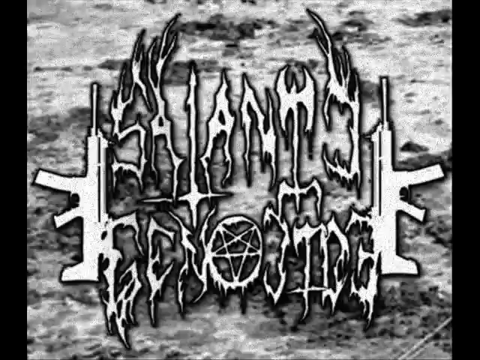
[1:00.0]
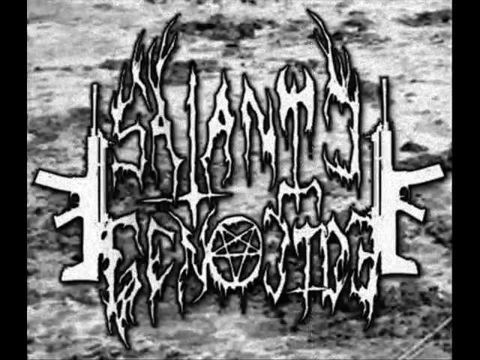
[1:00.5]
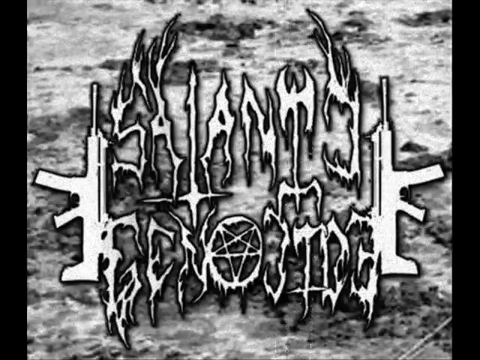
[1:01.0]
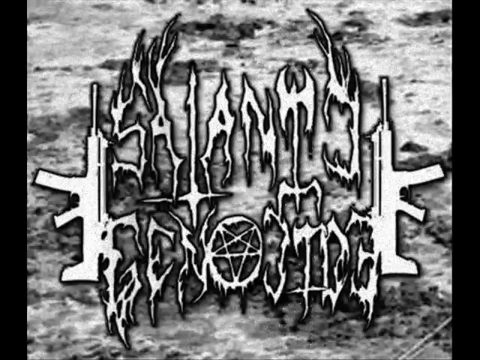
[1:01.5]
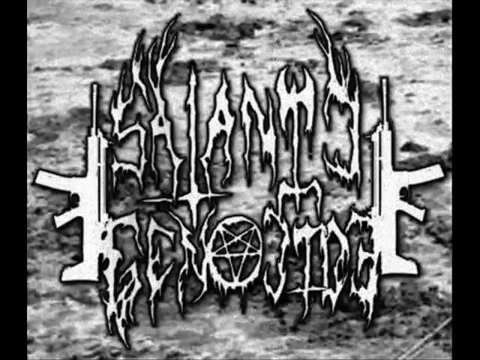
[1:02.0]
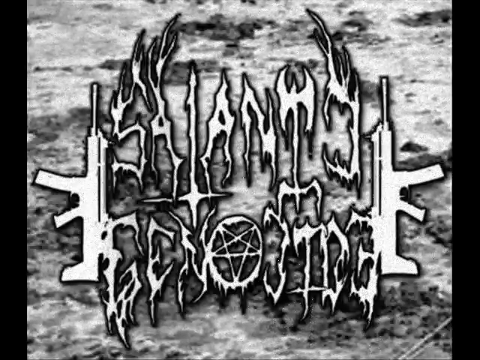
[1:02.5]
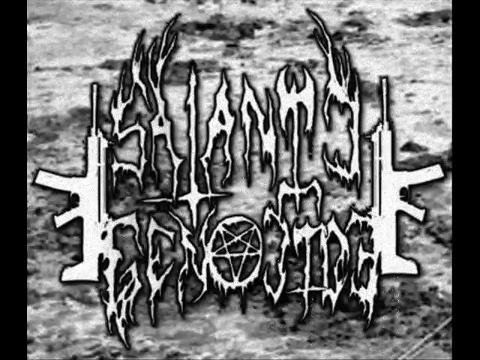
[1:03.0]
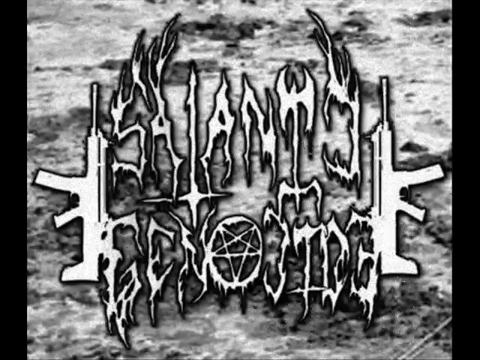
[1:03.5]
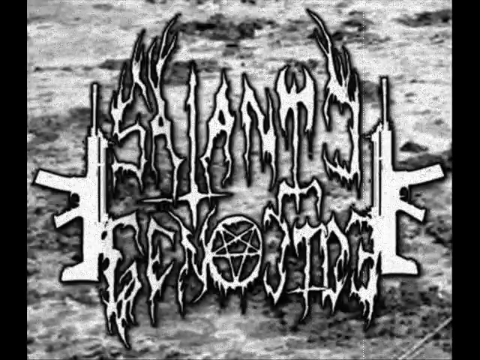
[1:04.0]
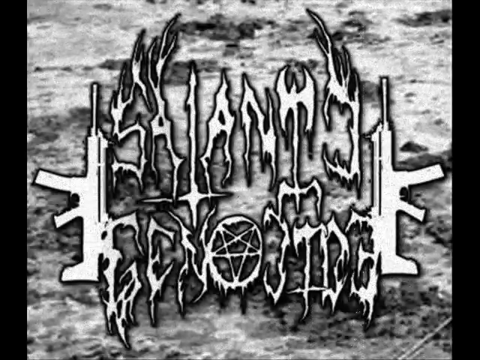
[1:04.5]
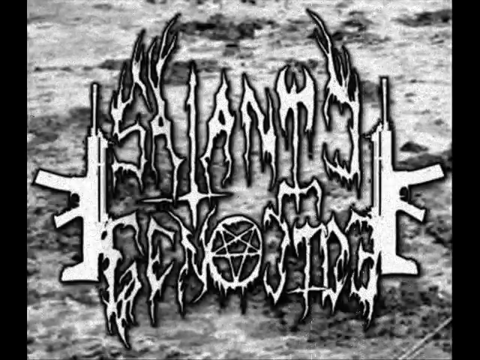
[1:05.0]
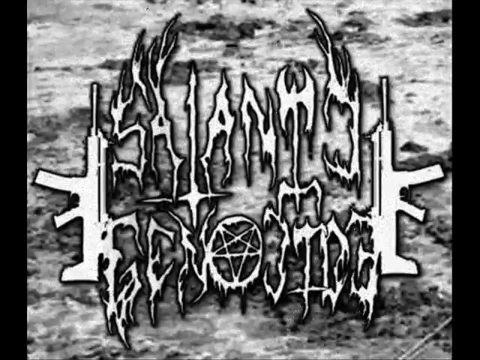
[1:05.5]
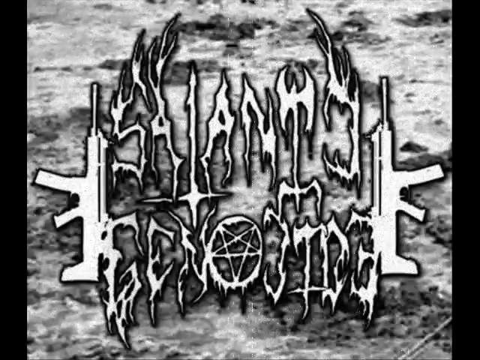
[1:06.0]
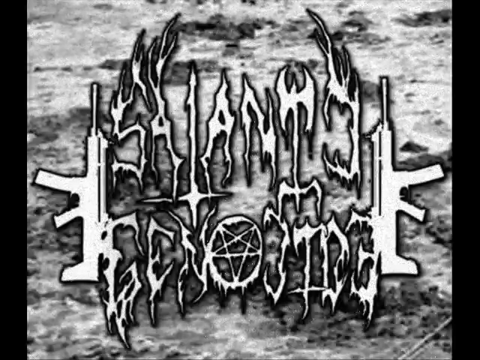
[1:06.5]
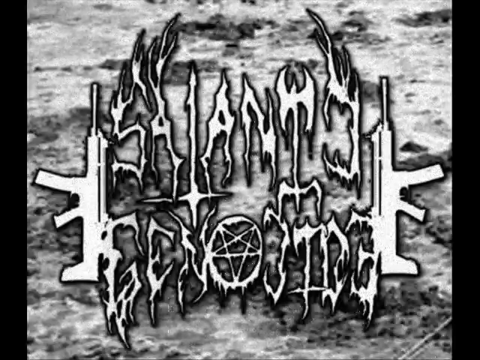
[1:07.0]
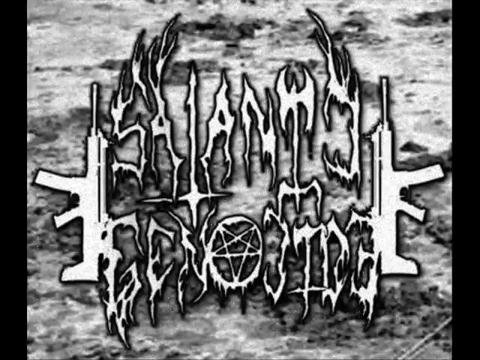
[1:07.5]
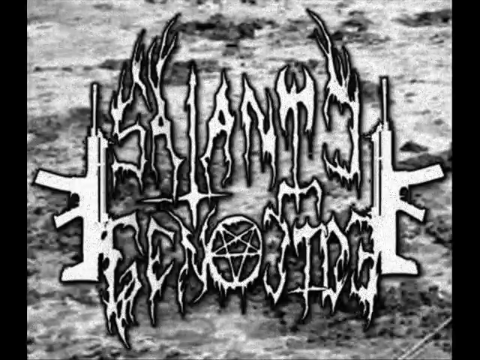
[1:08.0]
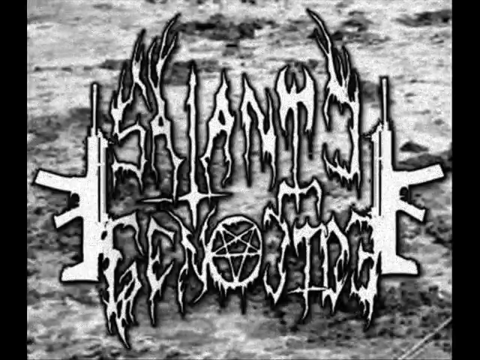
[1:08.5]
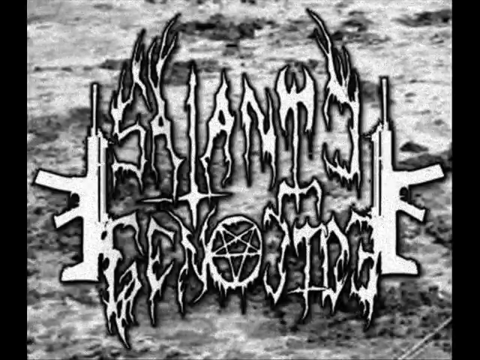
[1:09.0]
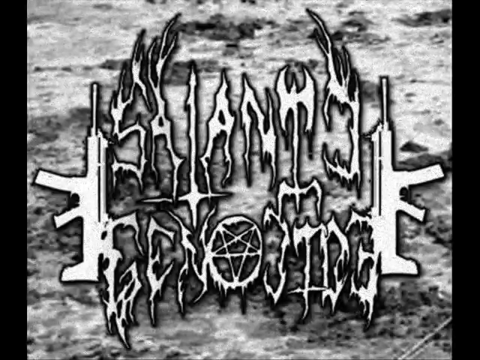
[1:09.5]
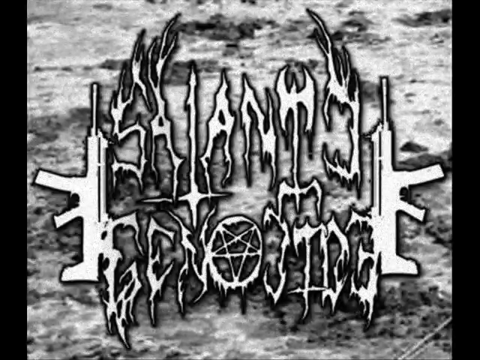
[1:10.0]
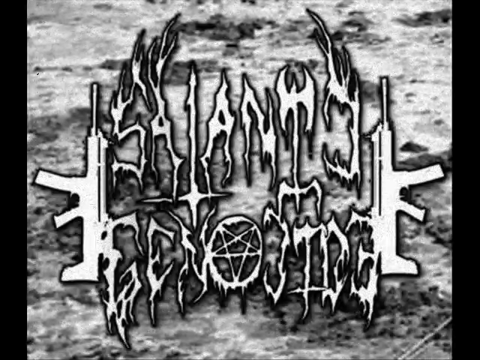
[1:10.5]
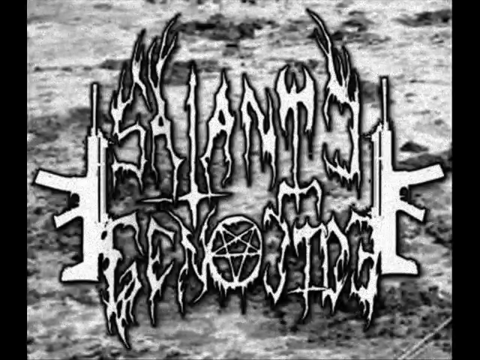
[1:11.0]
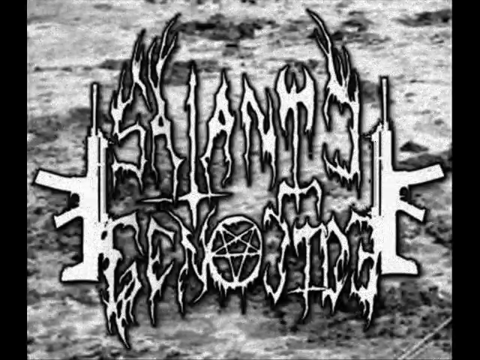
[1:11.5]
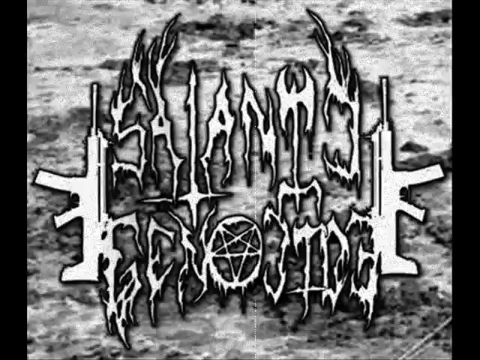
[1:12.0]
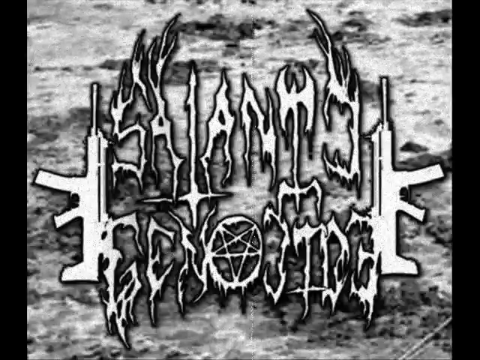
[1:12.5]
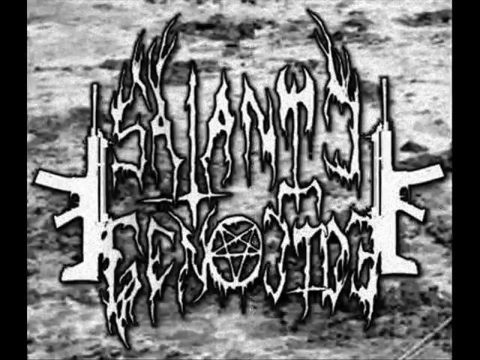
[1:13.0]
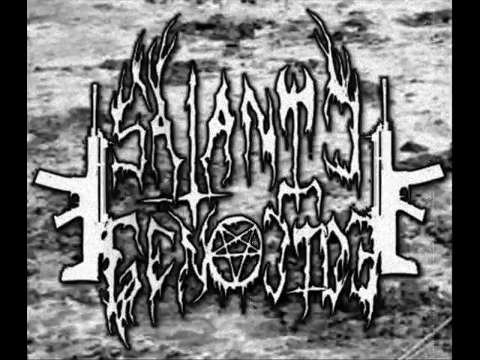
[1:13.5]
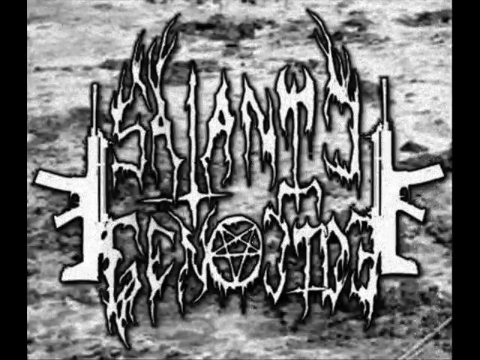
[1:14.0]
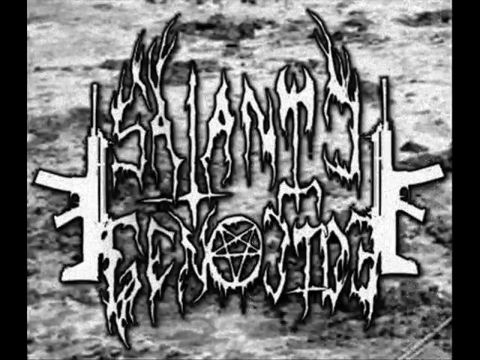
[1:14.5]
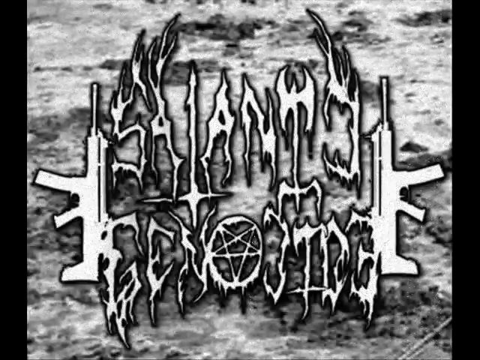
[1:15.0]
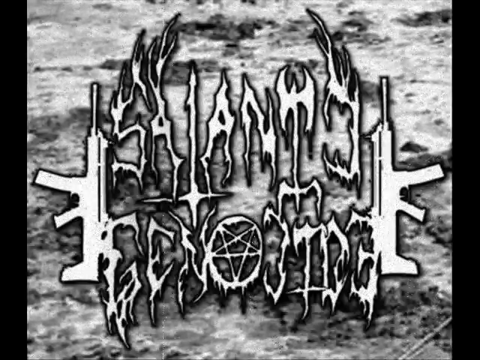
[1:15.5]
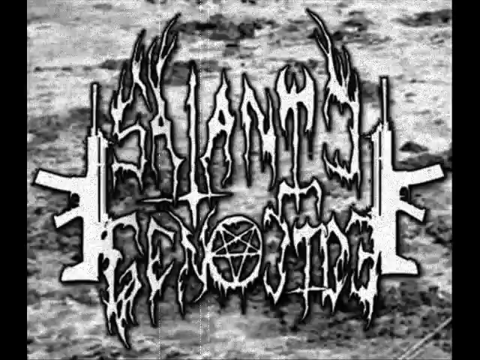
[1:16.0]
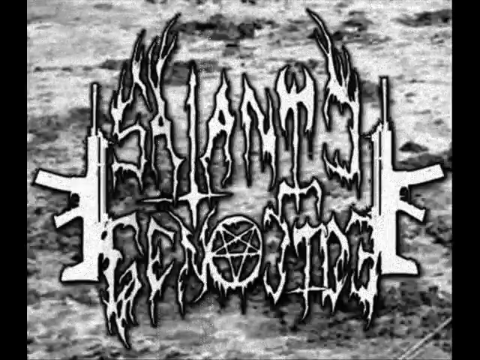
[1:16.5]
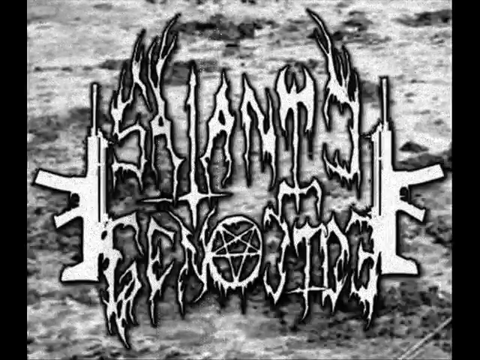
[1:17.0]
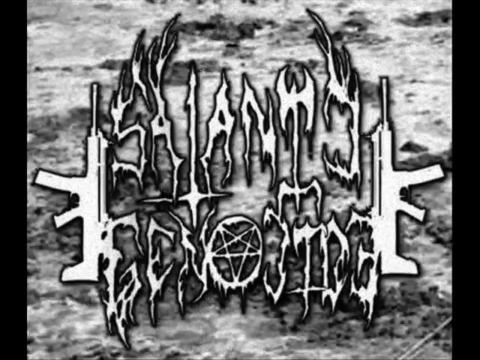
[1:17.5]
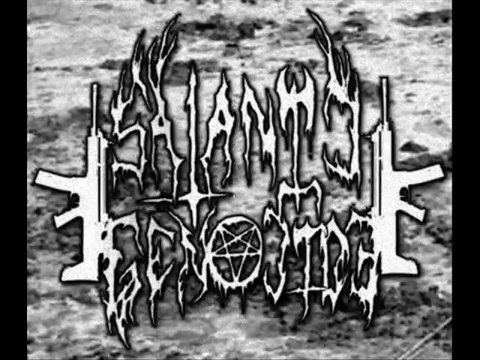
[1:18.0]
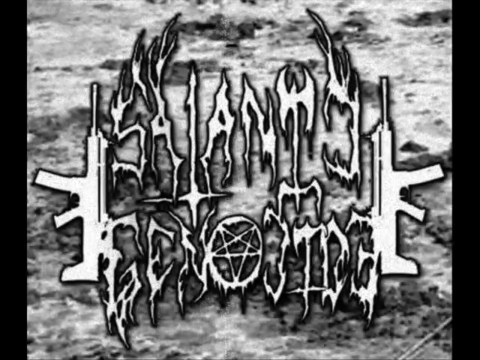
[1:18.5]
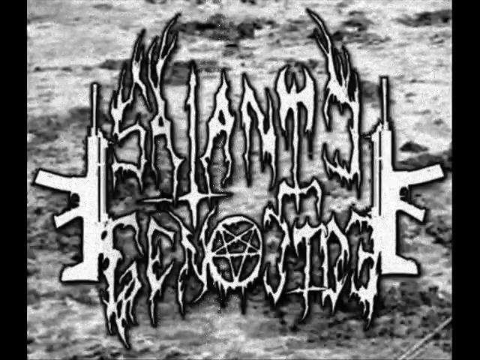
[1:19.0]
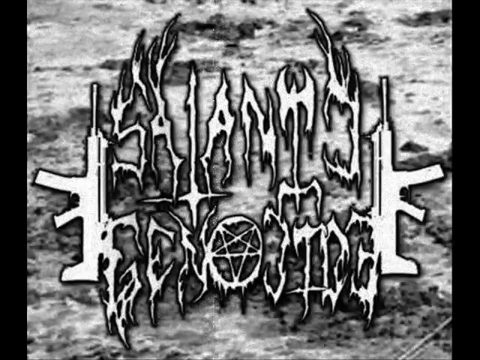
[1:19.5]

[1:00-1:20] The same picture of "Satanic Genocide" stays on screen.